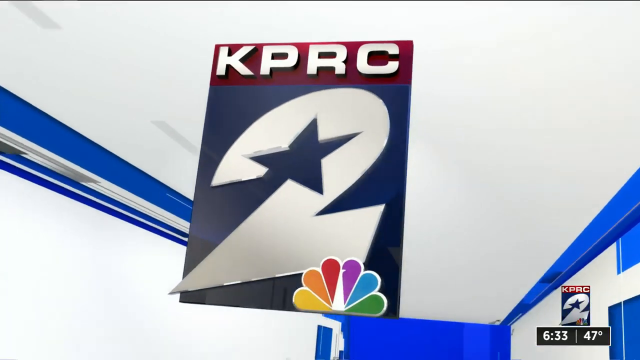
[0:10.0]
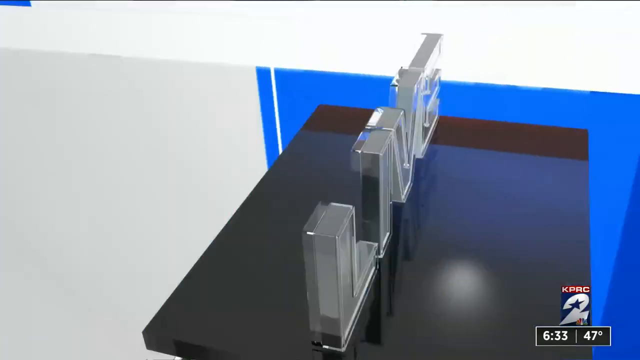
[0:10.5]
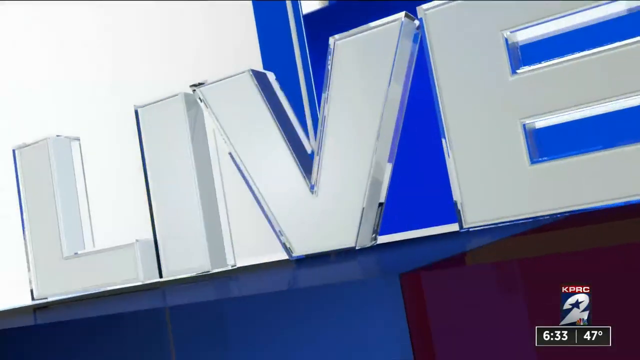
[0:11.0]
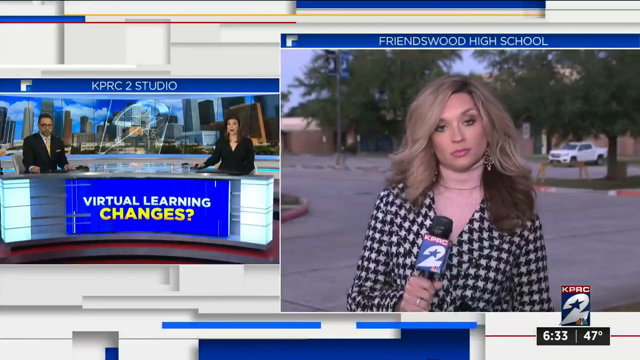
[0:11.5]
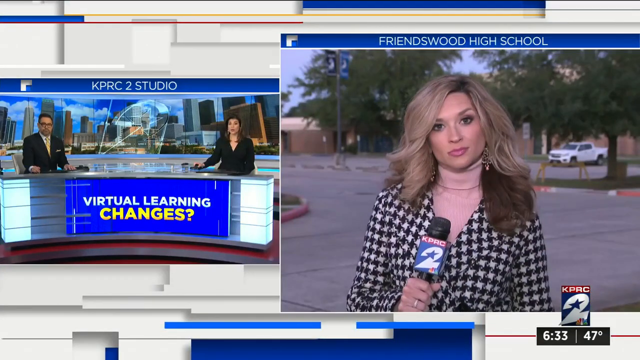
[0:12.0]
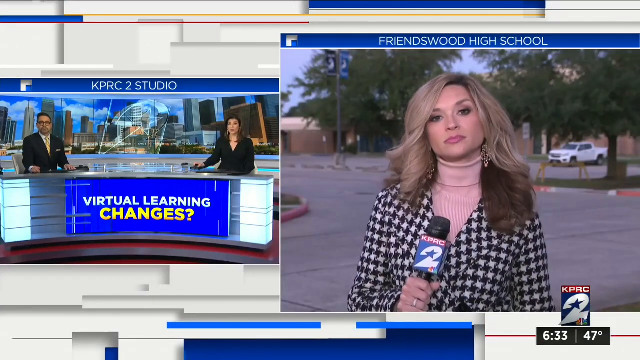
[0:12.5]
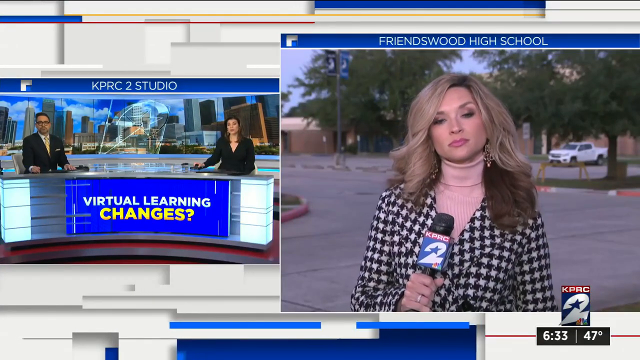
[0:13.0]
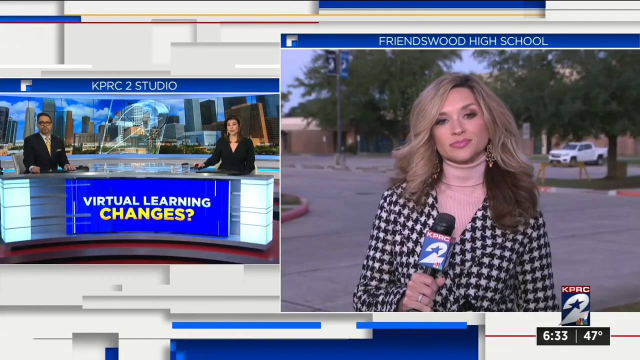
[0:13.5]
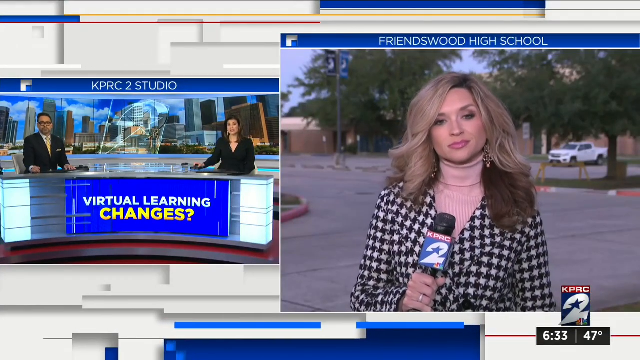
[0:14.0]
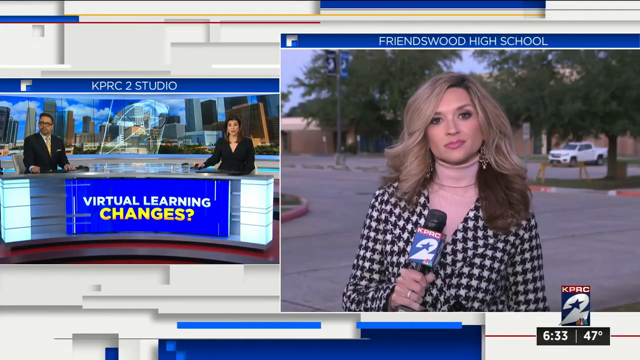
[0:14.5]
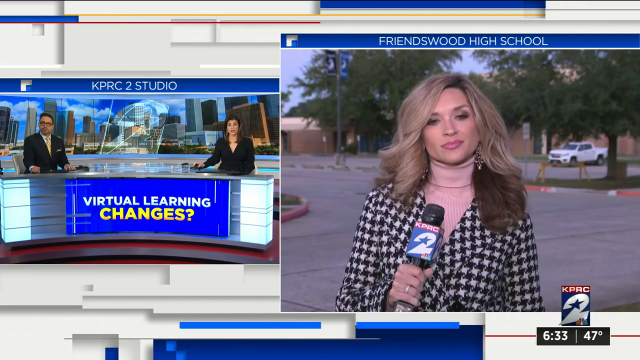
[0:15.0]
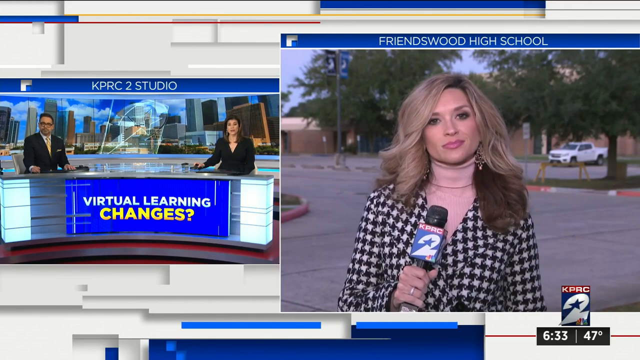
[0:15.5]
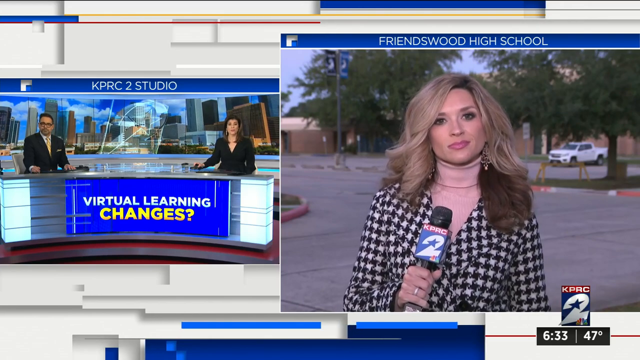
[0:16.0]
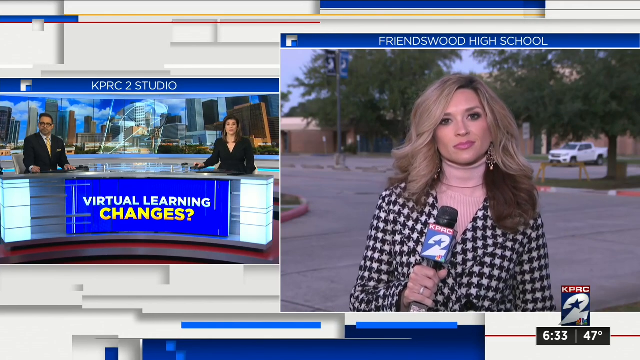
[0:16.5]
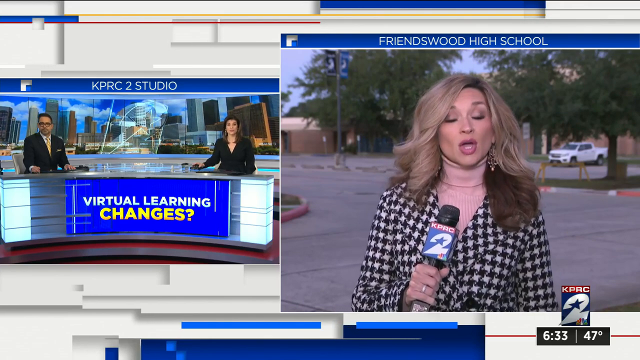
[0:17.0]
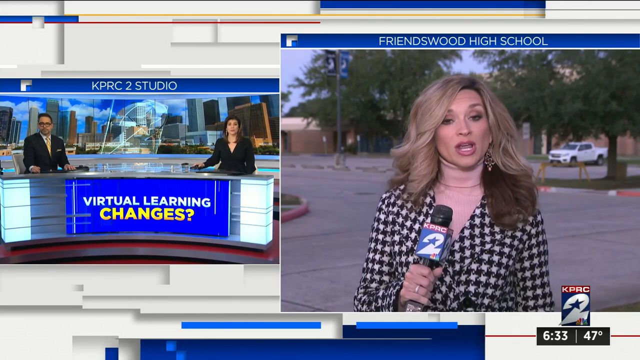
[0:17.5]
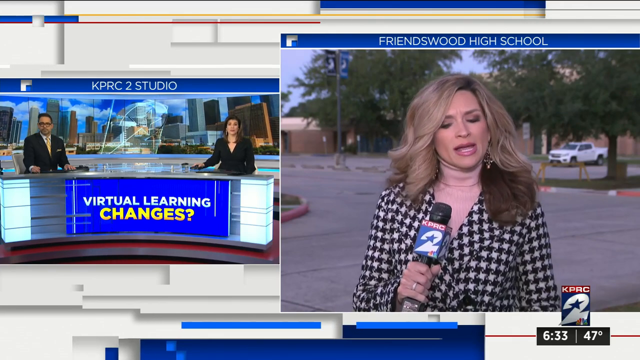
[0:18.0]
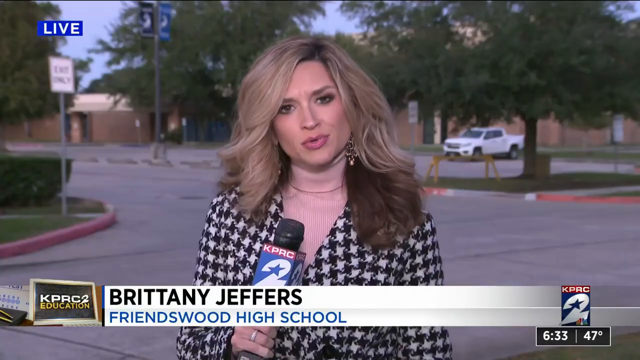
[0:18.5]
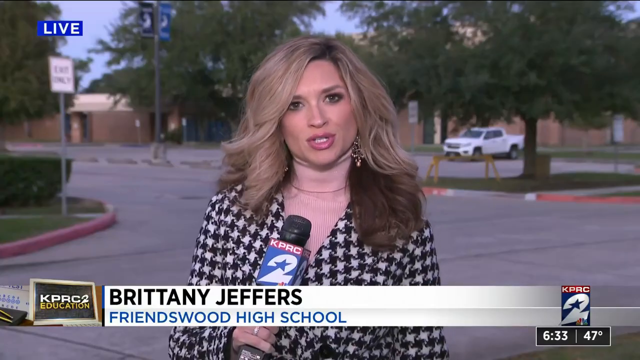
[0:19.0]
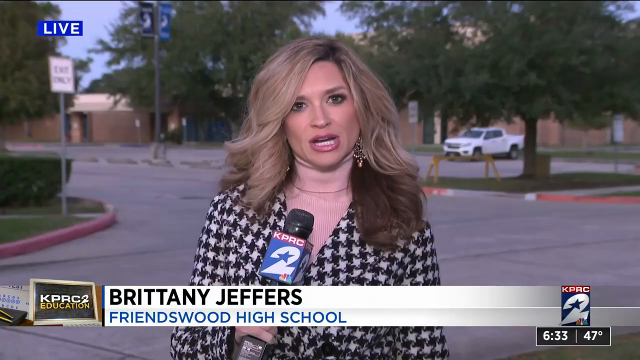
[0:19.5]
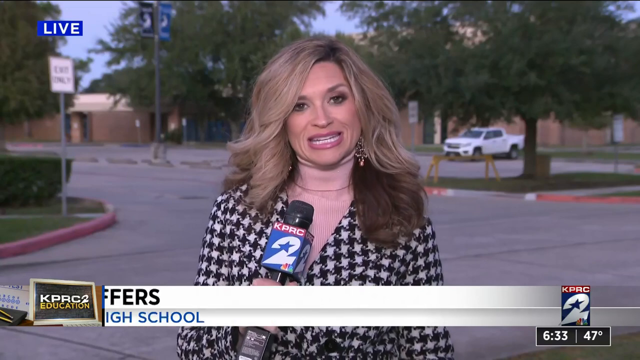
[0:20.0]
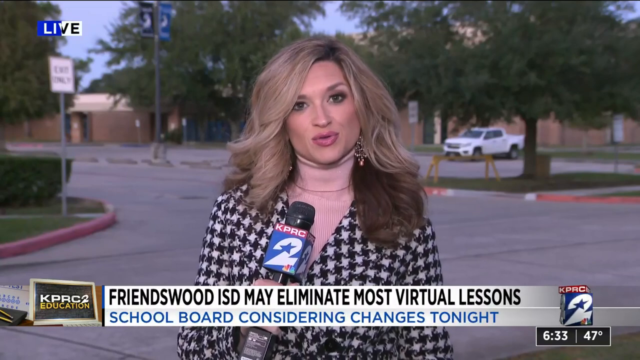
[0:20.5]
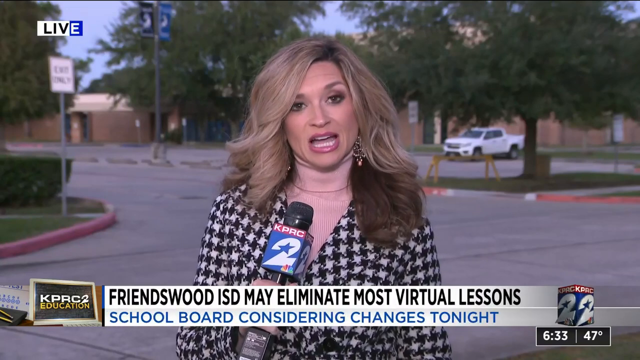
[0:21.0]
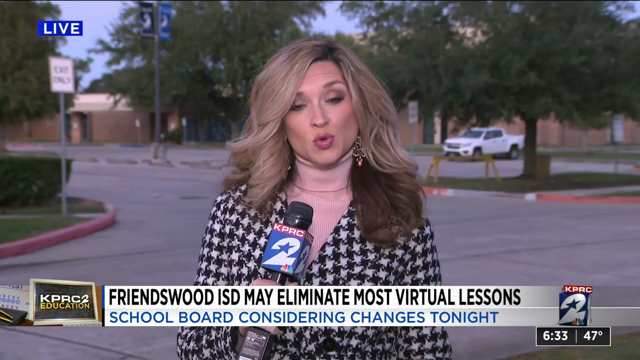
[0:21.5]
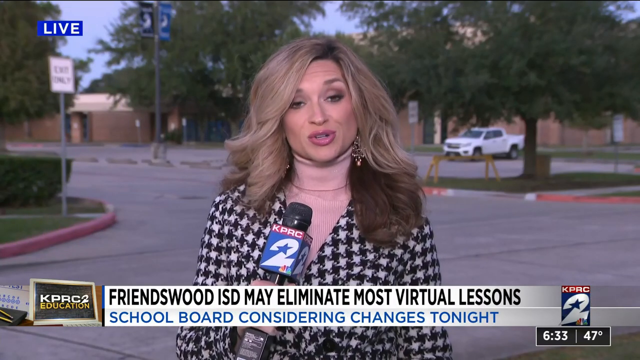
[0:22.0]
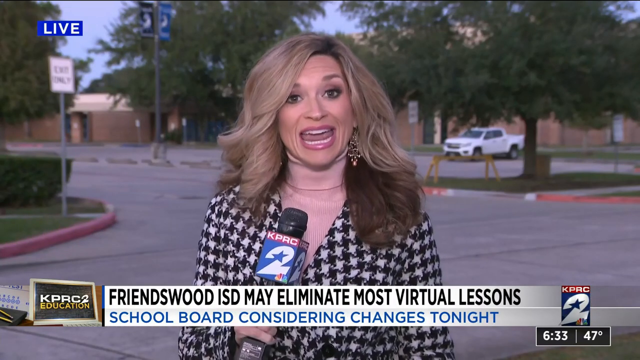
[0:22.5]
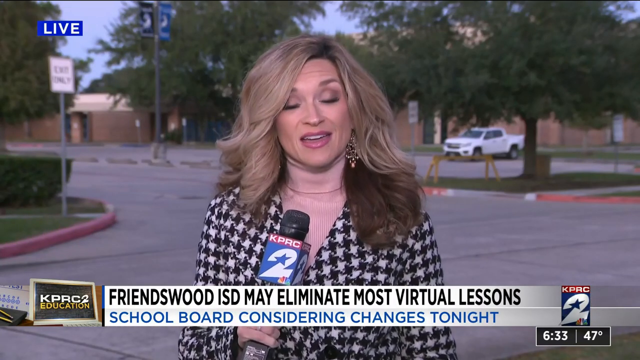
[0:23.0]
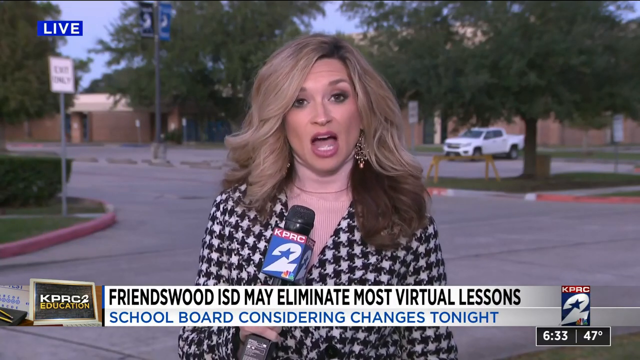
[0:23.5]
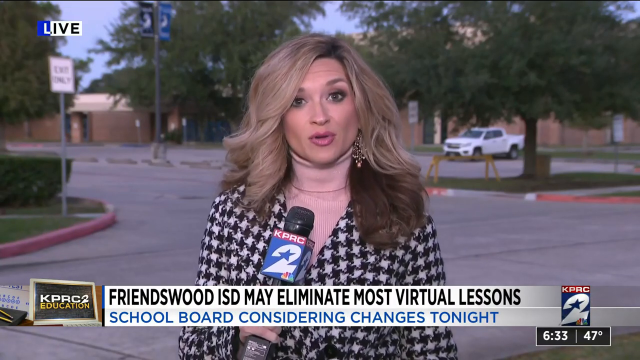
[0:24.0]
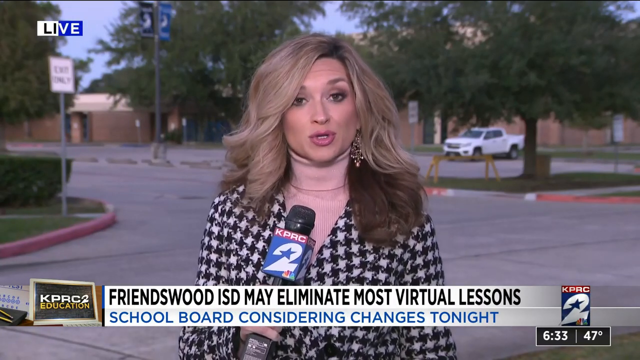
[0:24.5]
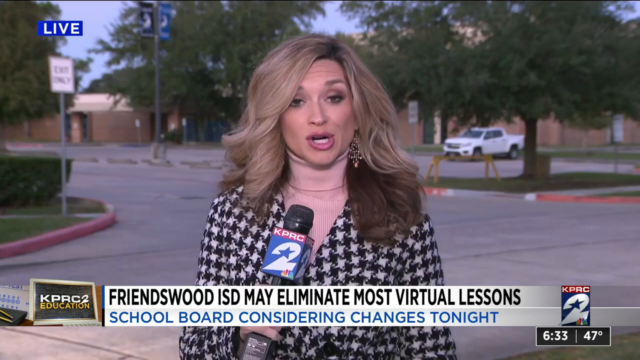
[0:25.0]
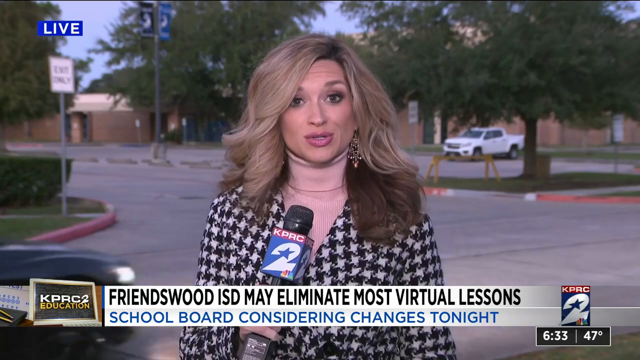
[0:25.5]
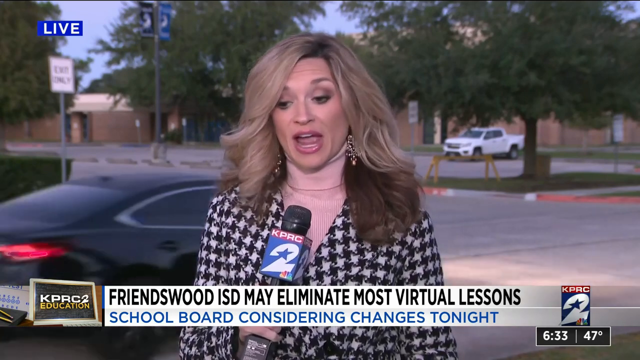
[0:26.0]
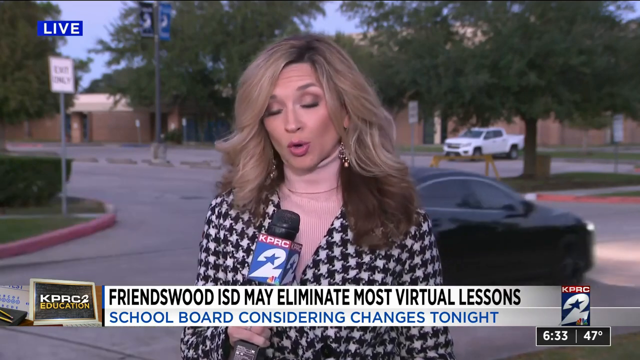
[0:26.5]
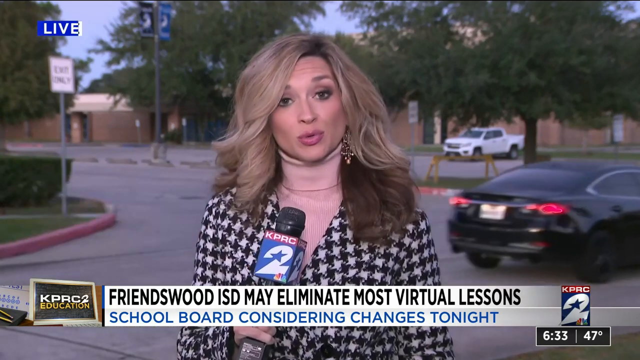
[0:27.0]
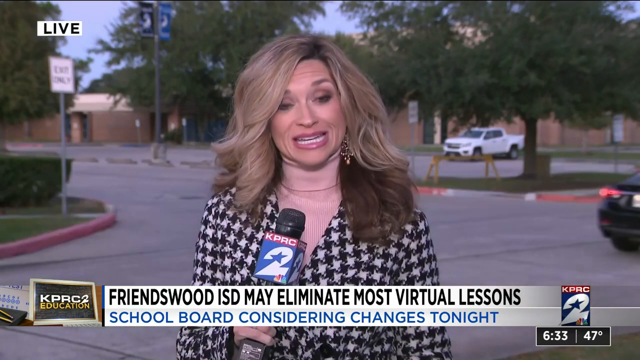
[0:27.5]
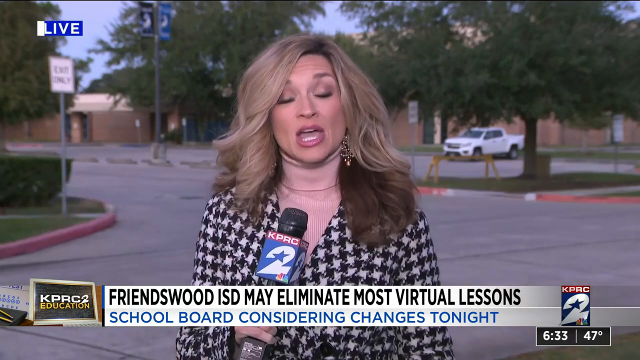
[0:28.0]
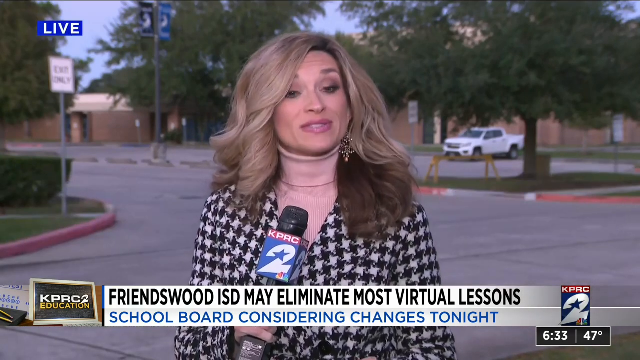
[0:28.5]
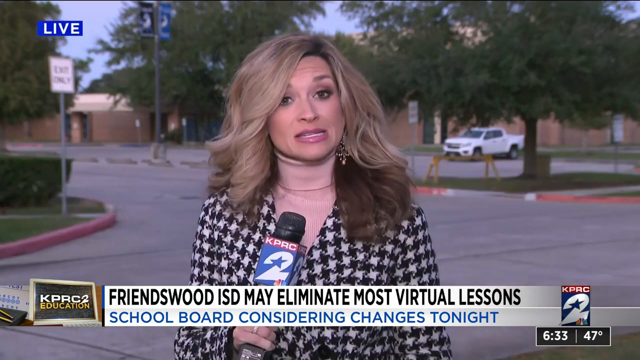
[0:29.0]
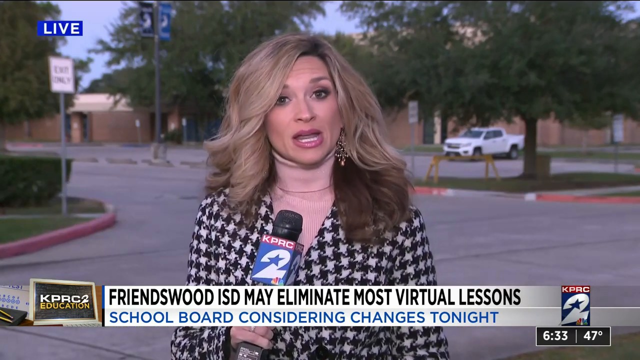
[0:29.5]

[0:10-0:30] The same transition plays, then flips over to show "live" and moves to a news reporter on the right, indicated as being at Brunswood High School. Her hair is mostly a dusty blonde color, while the bottom of her hair looks brown. She wears a very long, complex-looking earring with many different patterns, light pink lipstick, and what seems to be pink eyeshadow, light or dark pink. The headline at the bottom reads "Brunswood ISD may eliminate most virtual lessons," followed by "school board considering changes tonight."